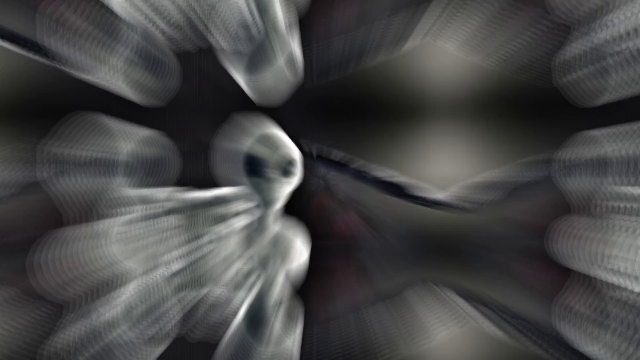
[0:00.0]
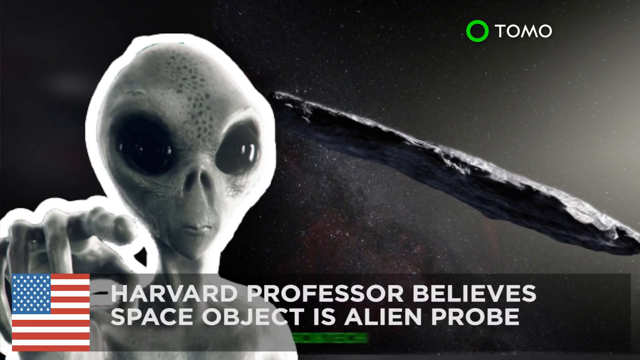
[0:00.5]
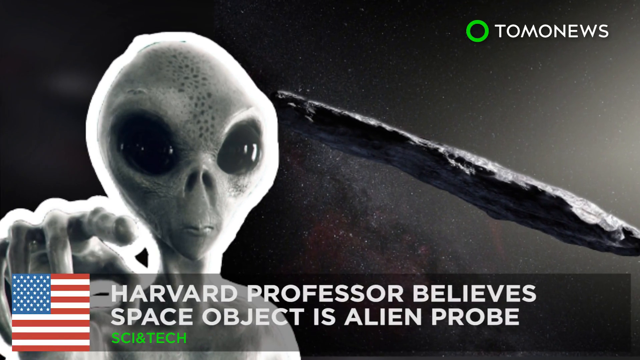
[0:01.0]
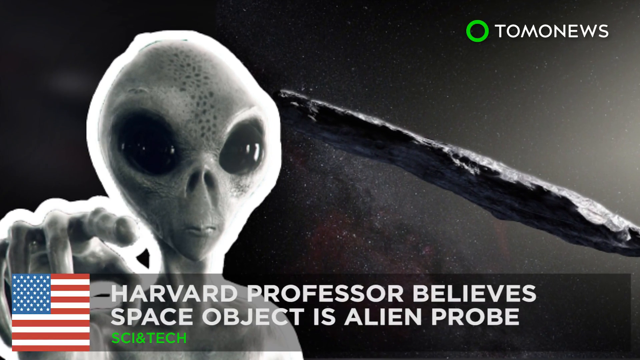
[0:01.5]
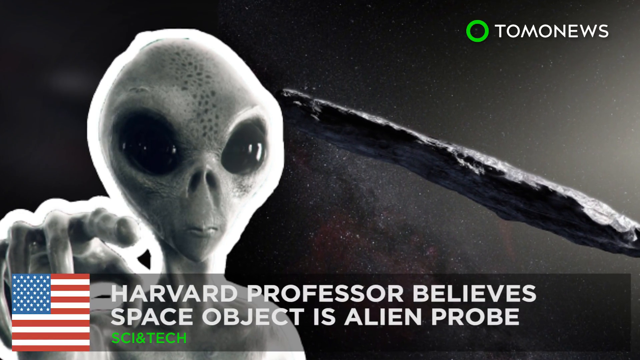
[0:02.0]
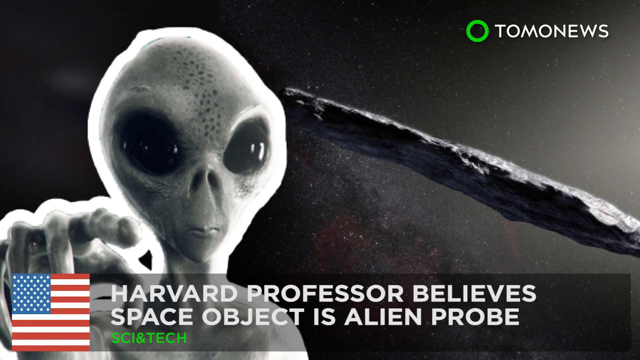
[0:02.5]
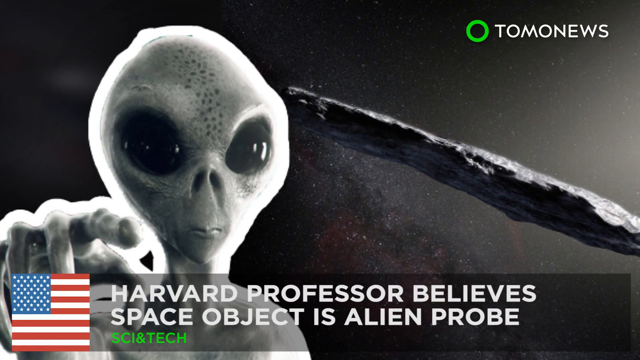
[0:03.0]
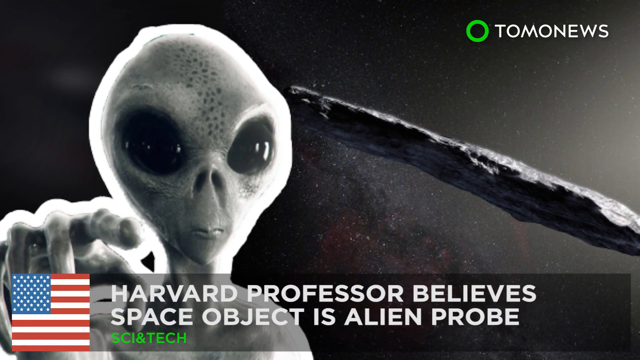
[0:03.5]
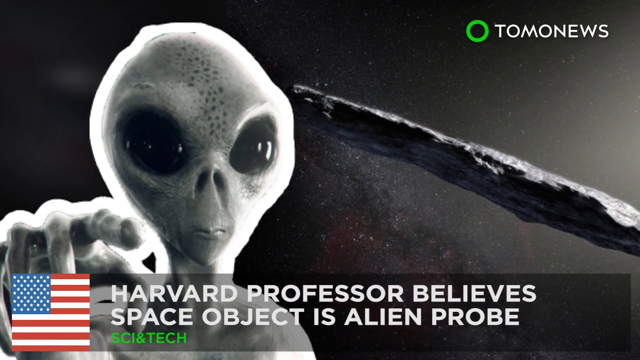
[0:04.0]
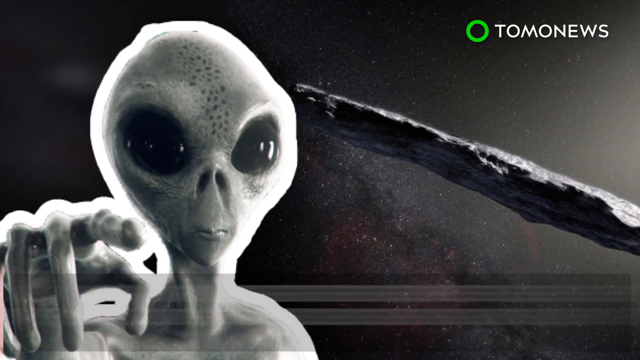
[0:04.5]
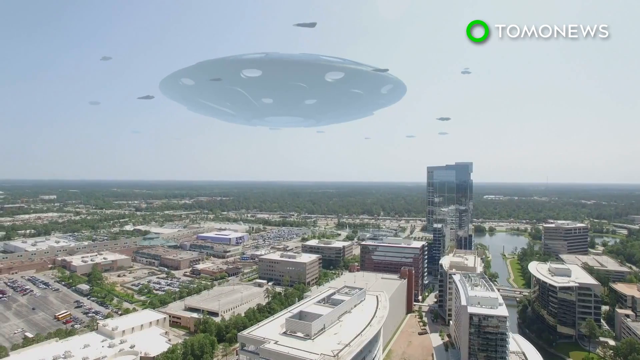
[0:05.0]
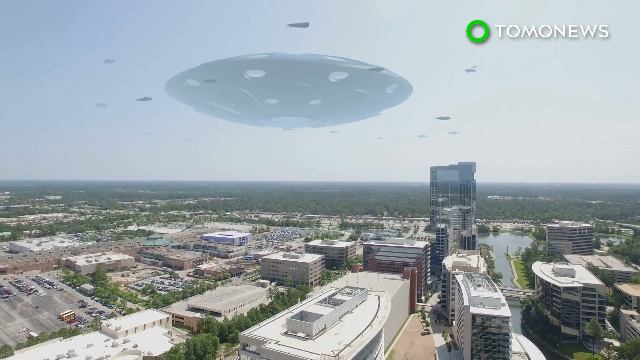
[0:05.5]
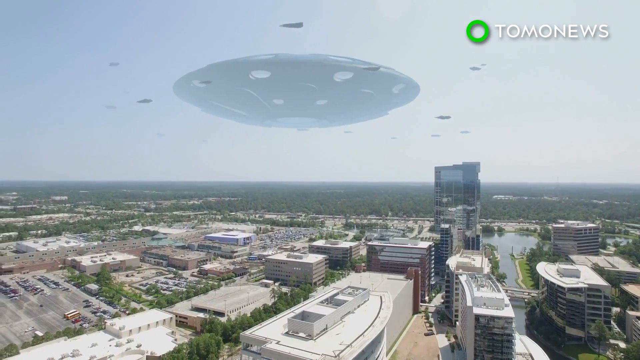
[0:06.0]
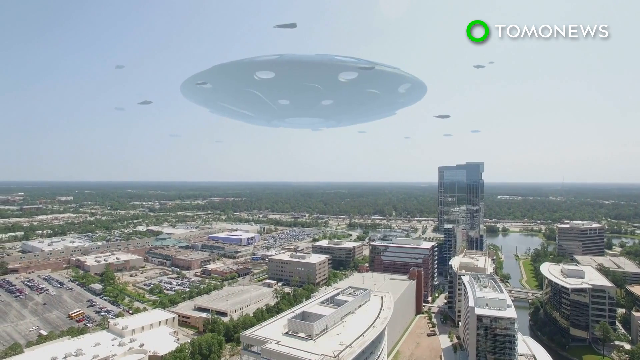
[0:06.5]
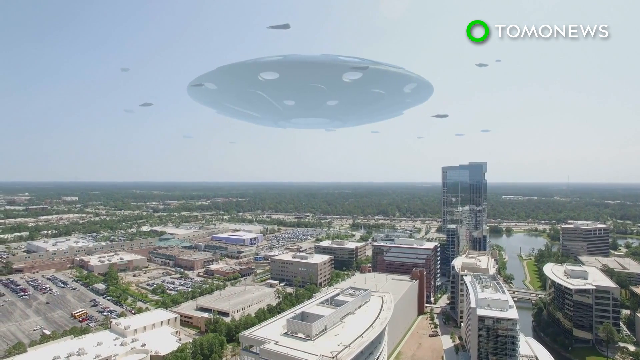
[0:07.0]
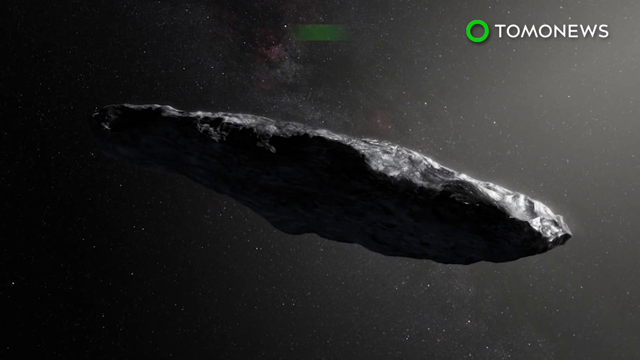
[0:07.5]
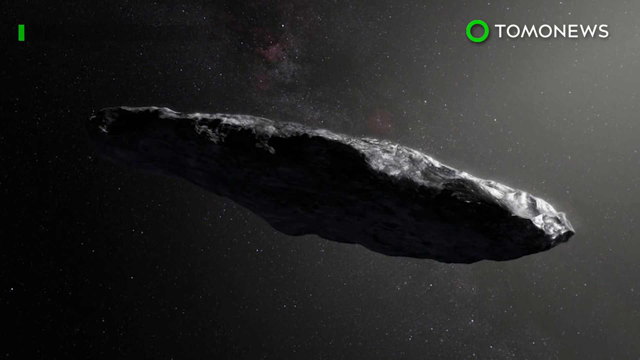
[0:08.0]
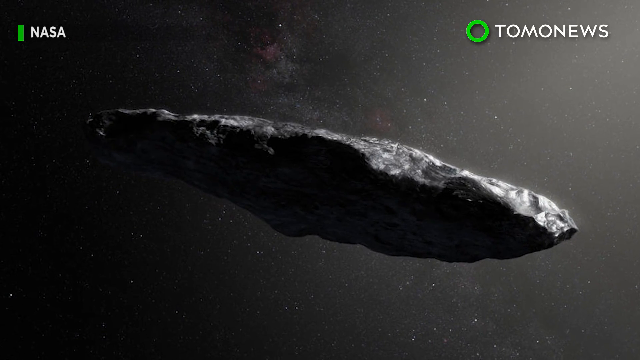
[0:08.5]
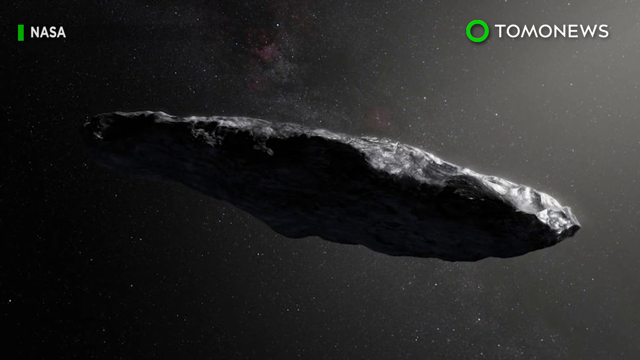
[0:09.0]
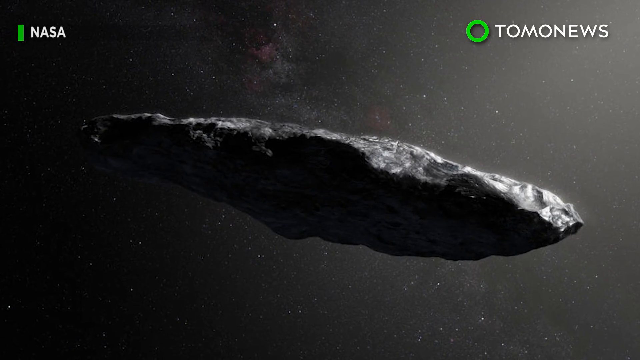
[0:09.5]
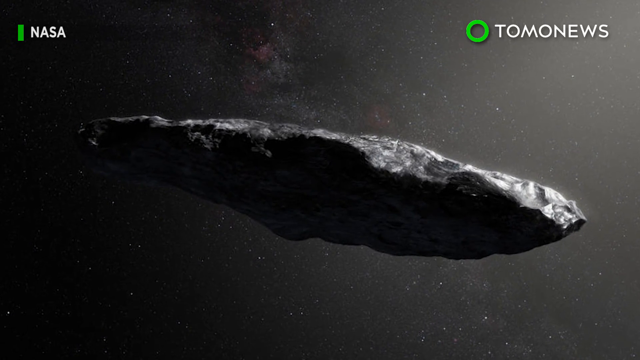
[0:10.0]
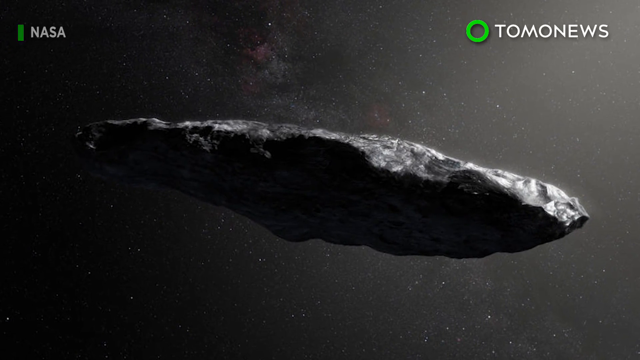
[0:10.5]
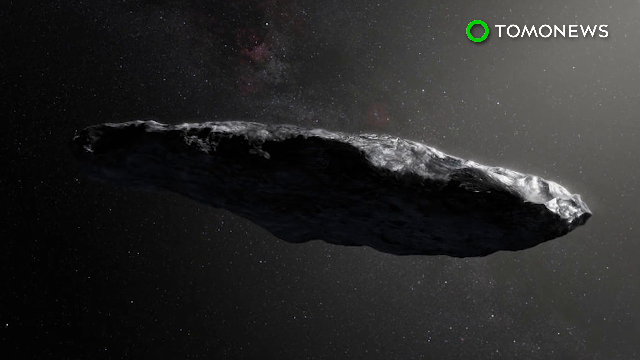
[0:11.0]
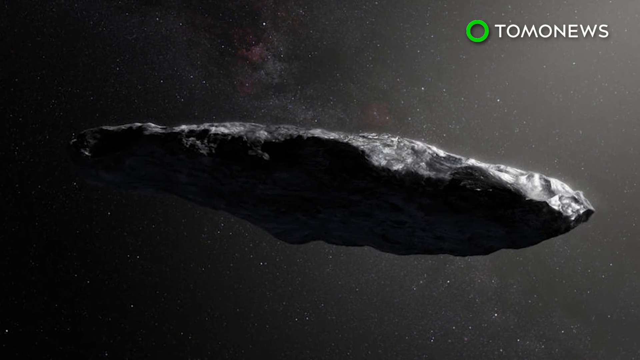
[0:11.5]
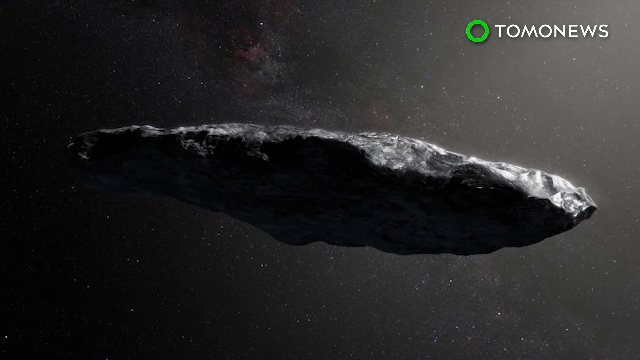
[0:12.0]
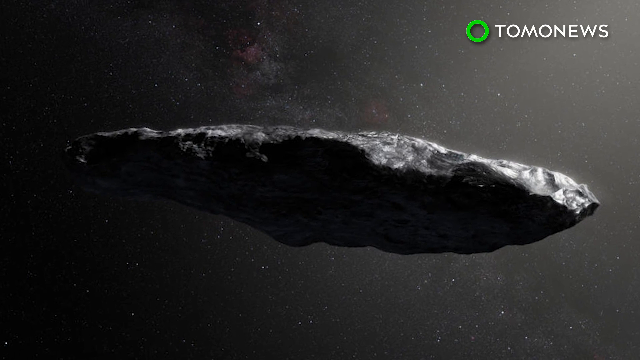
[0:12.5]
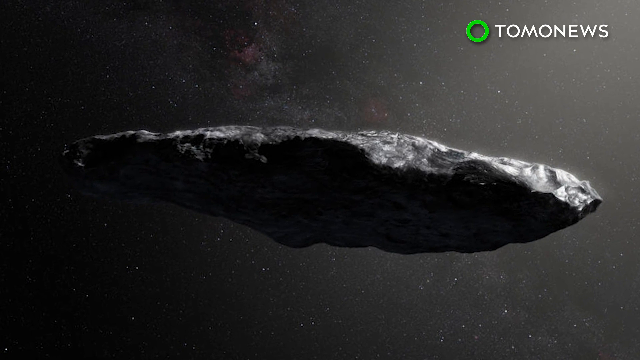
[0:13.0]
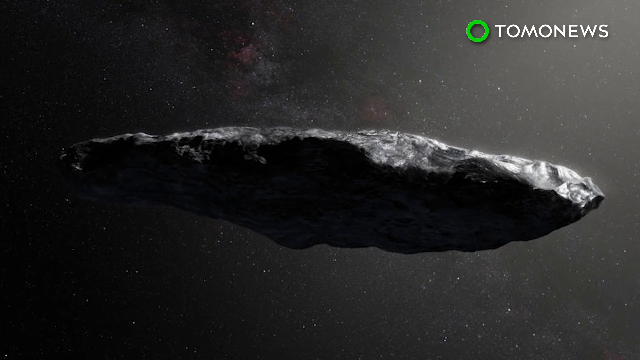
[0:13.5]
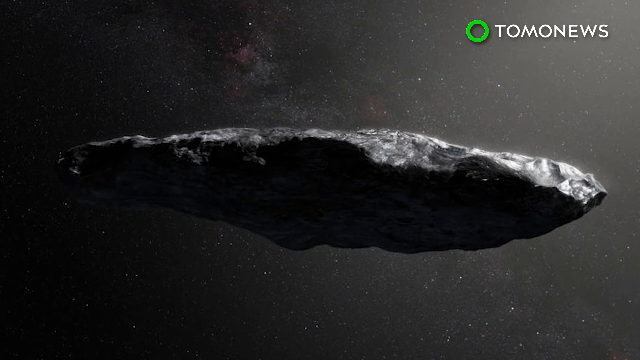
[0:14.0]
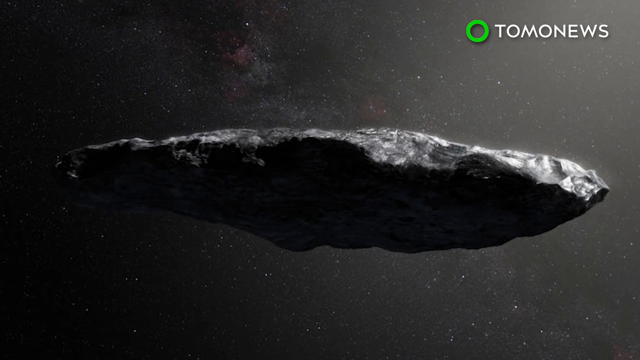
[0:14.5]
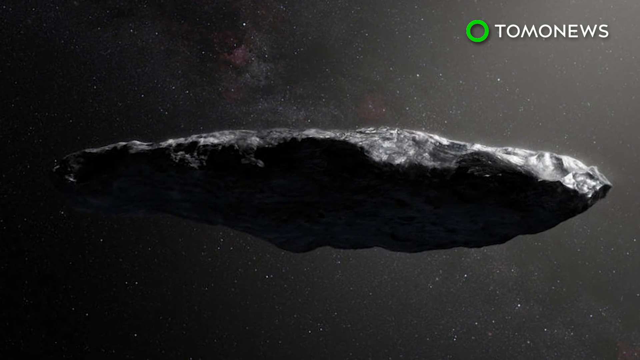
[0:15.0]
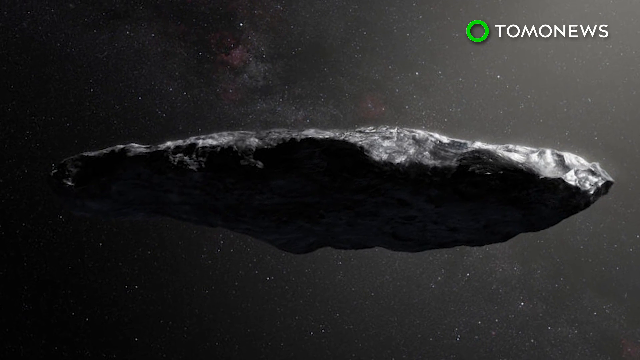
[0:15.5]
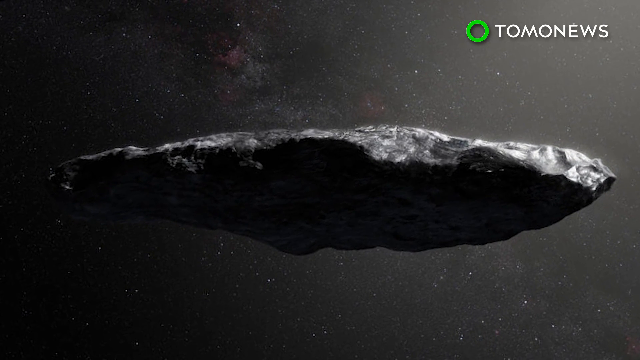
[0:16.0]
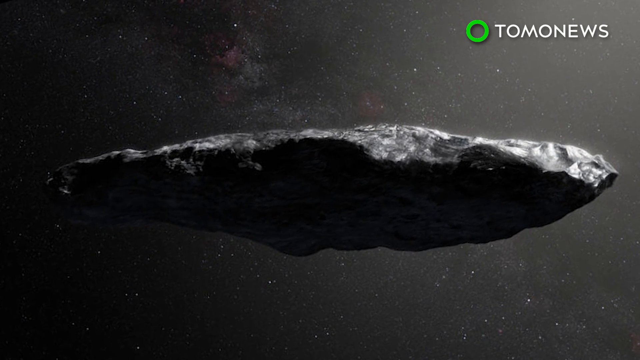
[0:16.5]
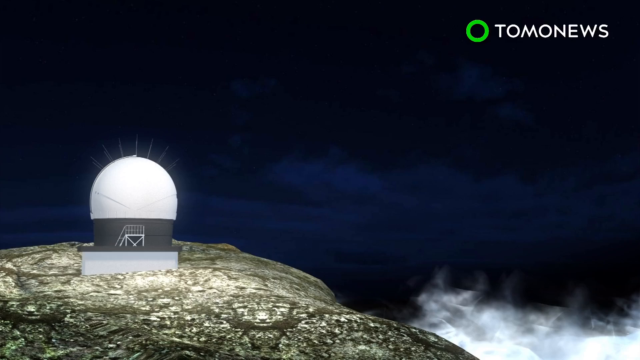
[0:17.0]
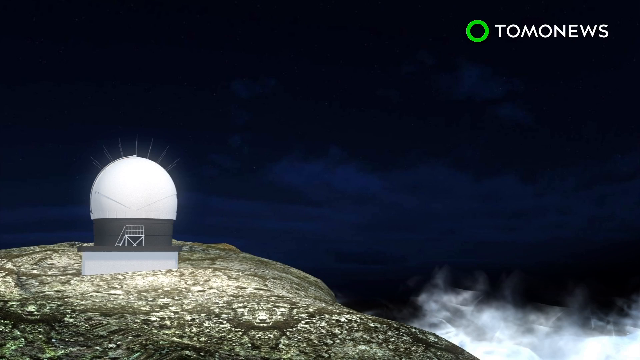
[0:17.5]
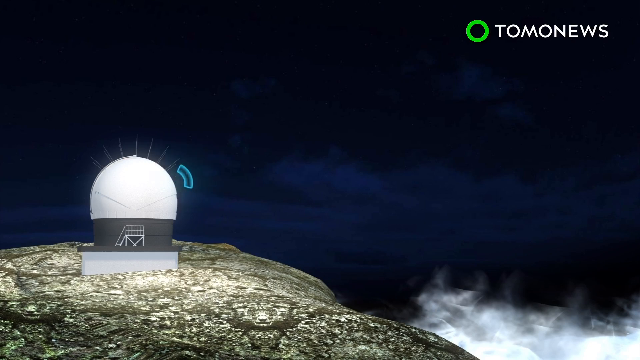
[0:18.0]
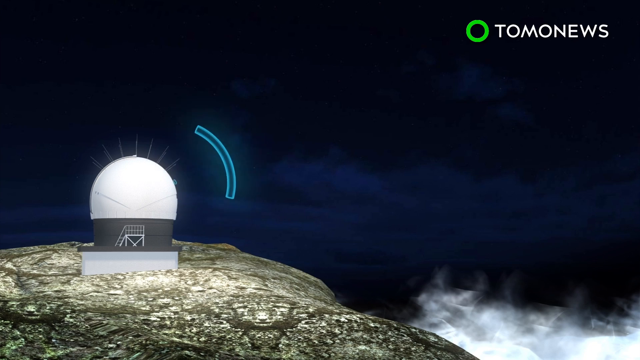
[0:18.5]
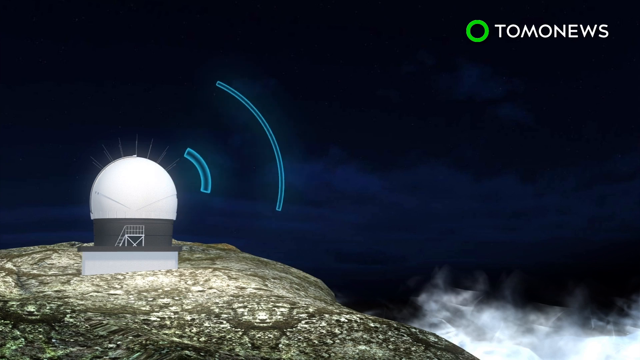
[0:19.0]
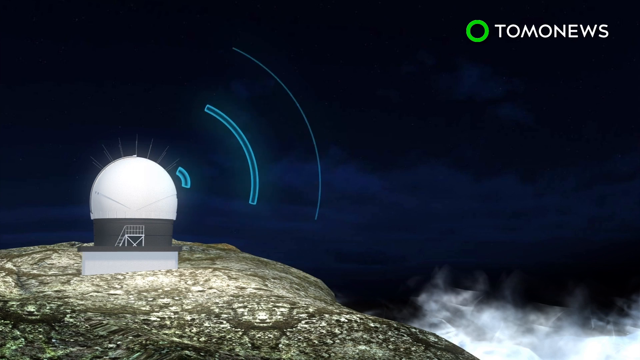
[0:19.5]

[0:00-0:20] The video opens with a zoom in on what appears to be an alien creature on the left side of the frame. The creature is white, with some black dots running vertically up across its forehead and very large black reflective eyes. Its right hand is raised and pointed toward the camera. At the bottom, inside a transparent rectangular box, white bold text reads "Harvard professor believes space object is alien probe", and to the left of it, at the bottom left, is an American flag. The background behind the alien is space with a large, sort of rock-looking object in it. The camera zooms in slowly on the alien before the scene switches to a city landscape, where what appears to be an alien spaceship, slightly transparent, floats into the sky at the top middle of the frame. The scene changes again, zooming in slowly in space on a giant rock-like structure with a sort of spaceship-like, very oval shape. Then the scene changes to a building on the bottom left, with a bunch of blue pulse waves moving from it toward the top right, up into the sky.